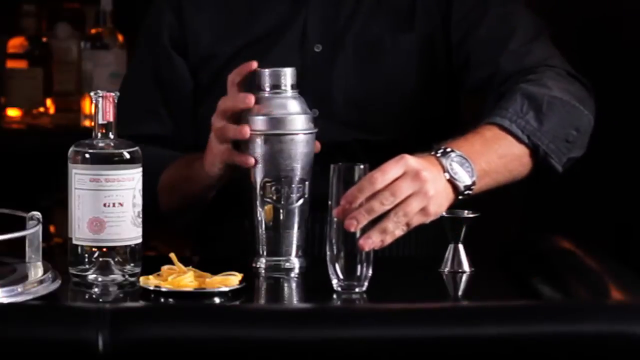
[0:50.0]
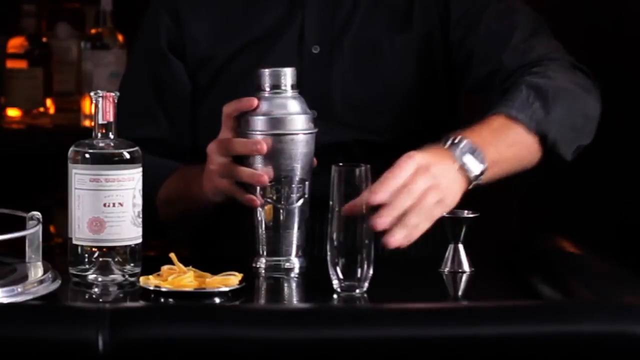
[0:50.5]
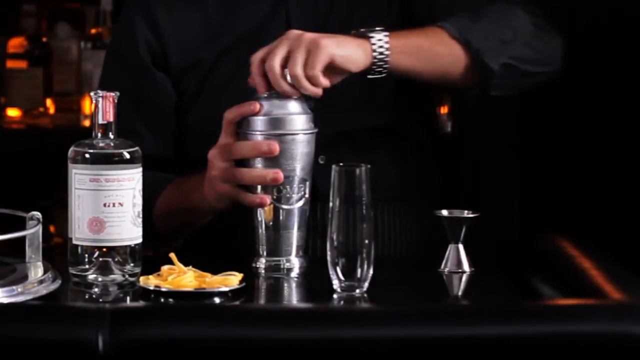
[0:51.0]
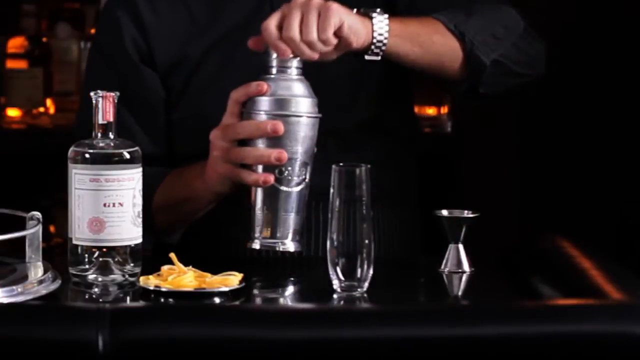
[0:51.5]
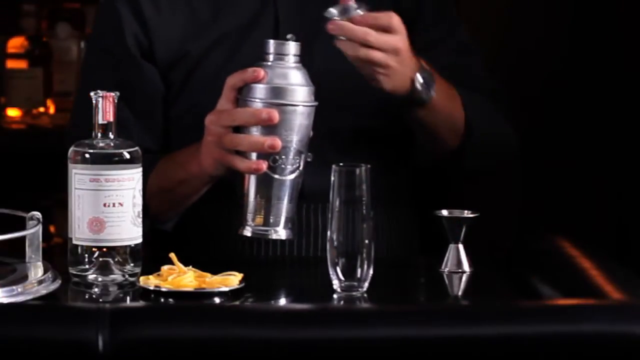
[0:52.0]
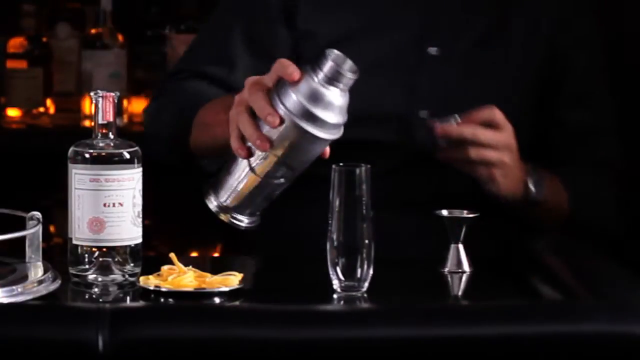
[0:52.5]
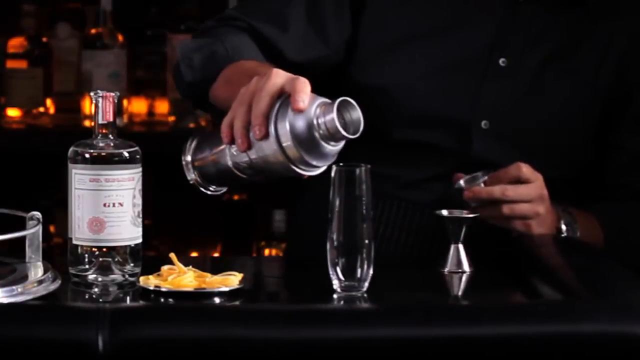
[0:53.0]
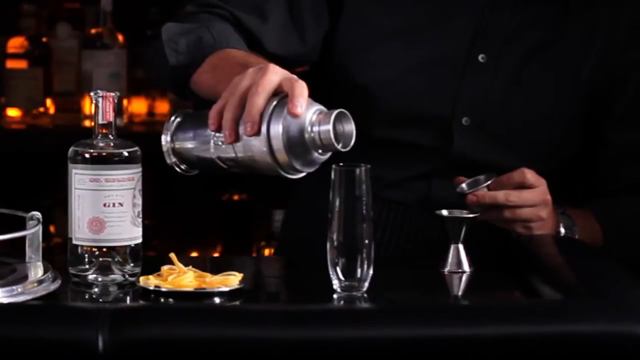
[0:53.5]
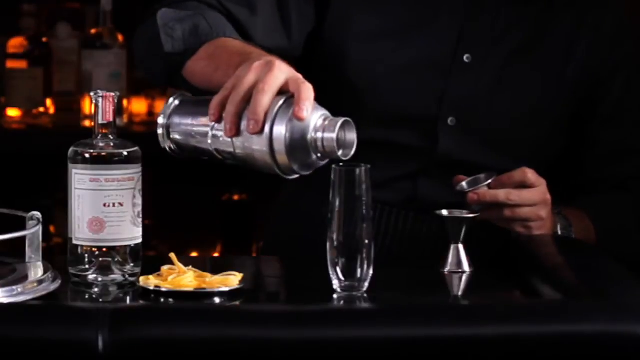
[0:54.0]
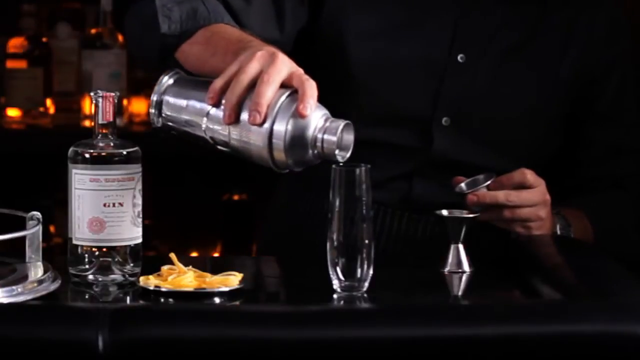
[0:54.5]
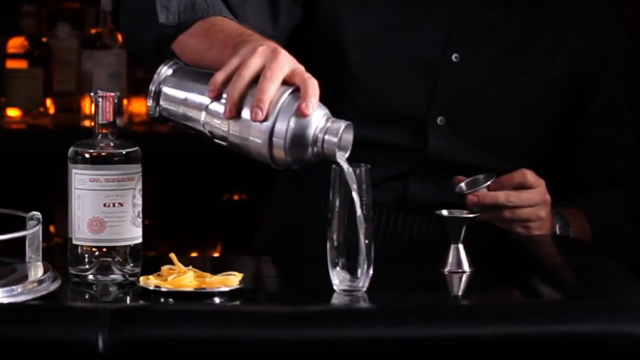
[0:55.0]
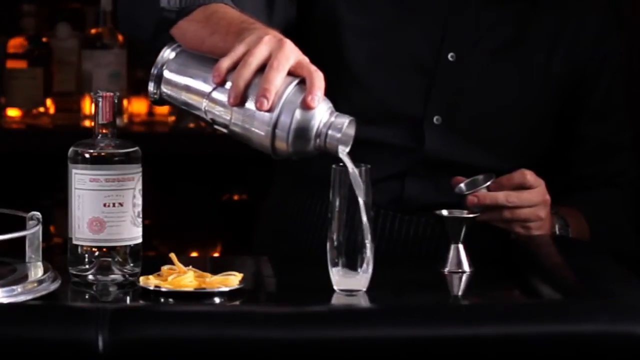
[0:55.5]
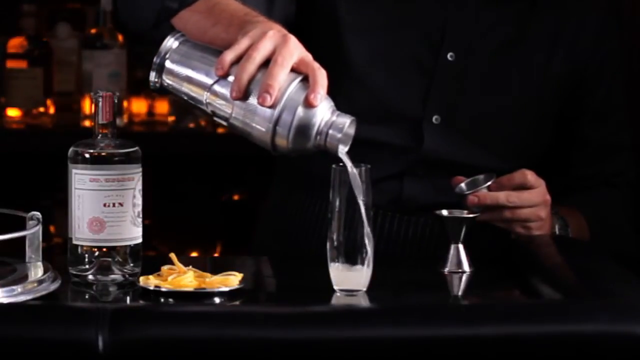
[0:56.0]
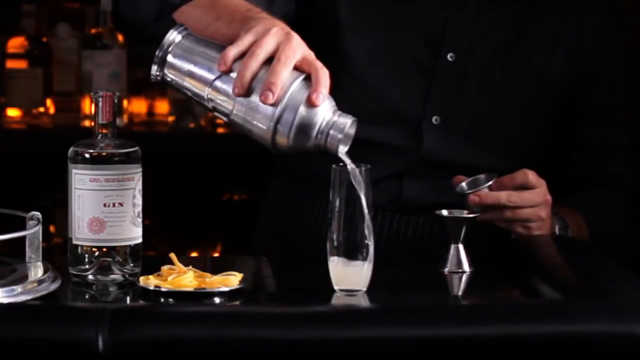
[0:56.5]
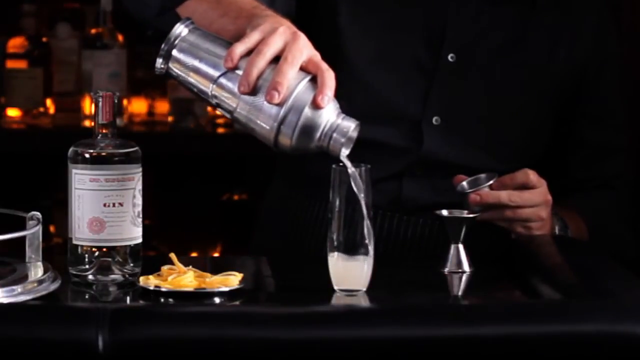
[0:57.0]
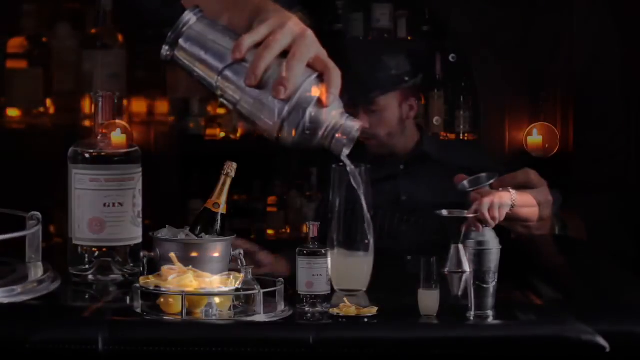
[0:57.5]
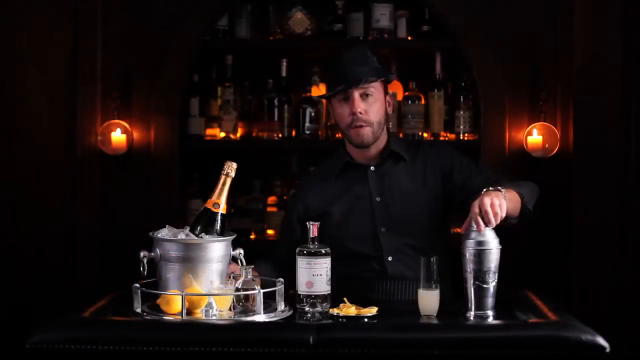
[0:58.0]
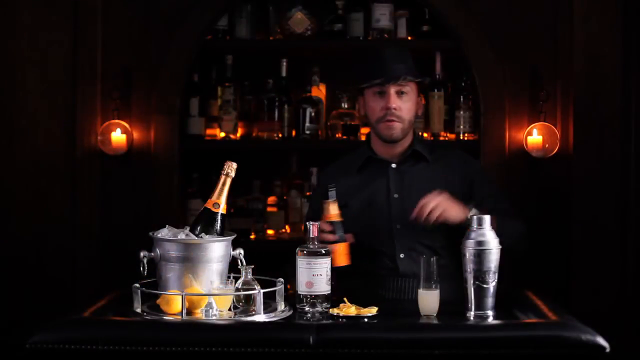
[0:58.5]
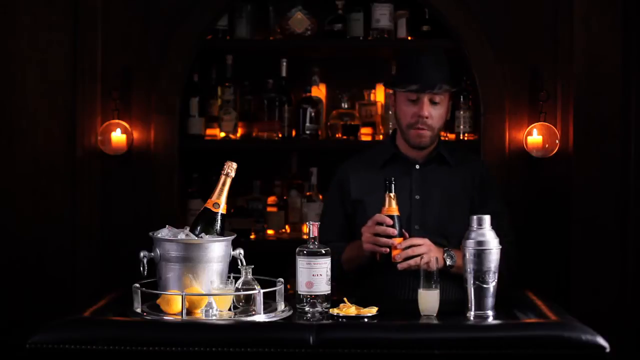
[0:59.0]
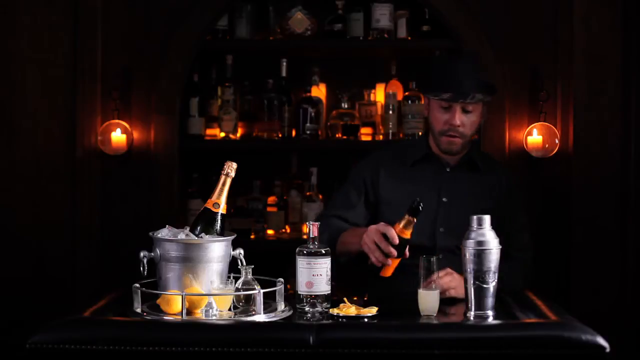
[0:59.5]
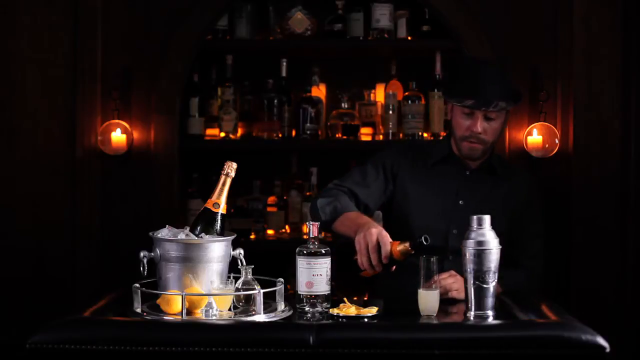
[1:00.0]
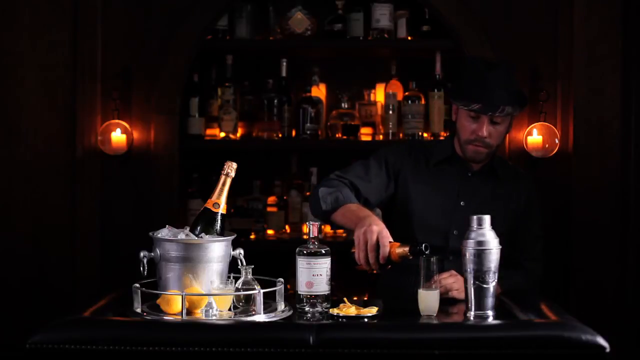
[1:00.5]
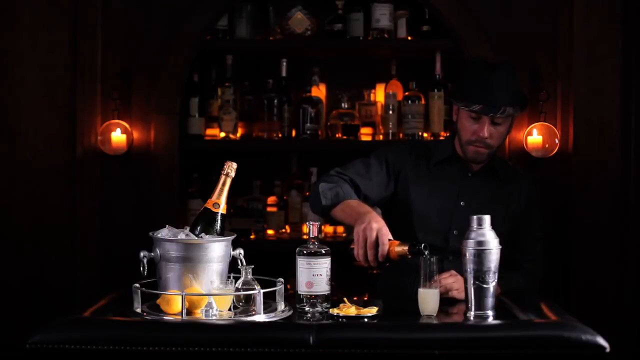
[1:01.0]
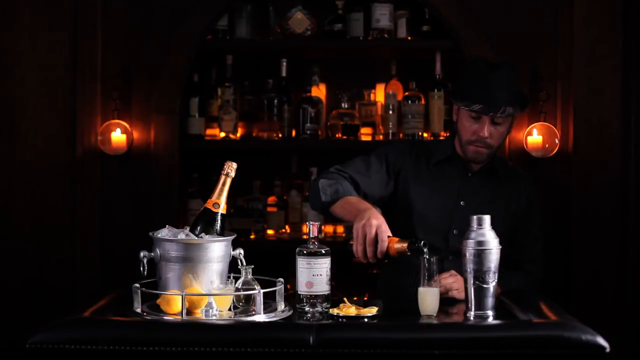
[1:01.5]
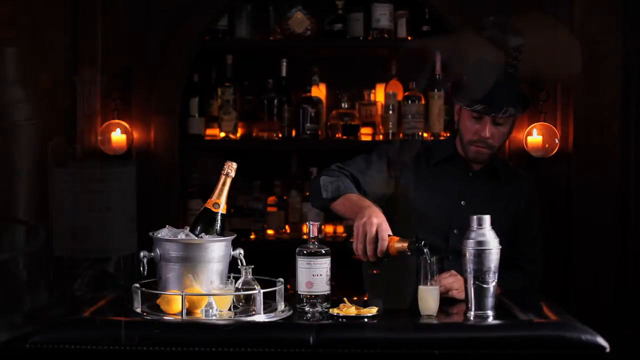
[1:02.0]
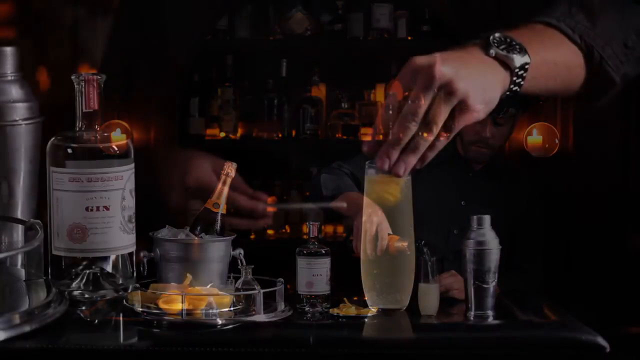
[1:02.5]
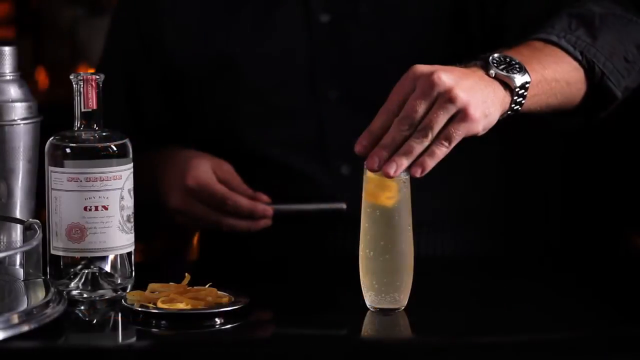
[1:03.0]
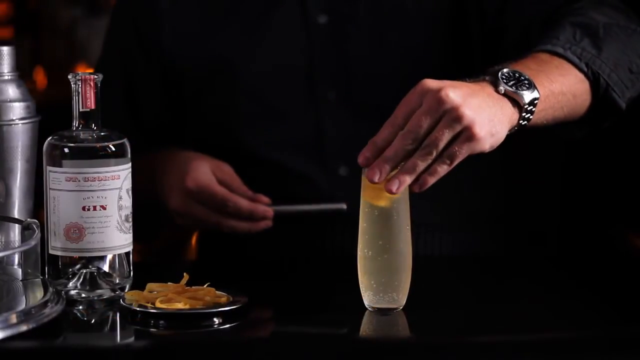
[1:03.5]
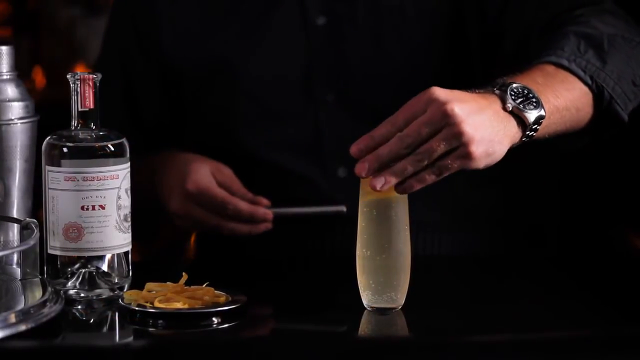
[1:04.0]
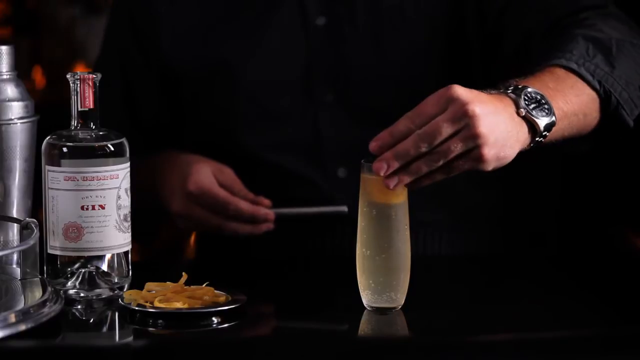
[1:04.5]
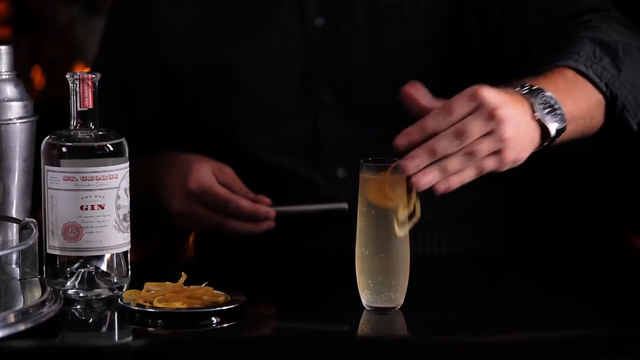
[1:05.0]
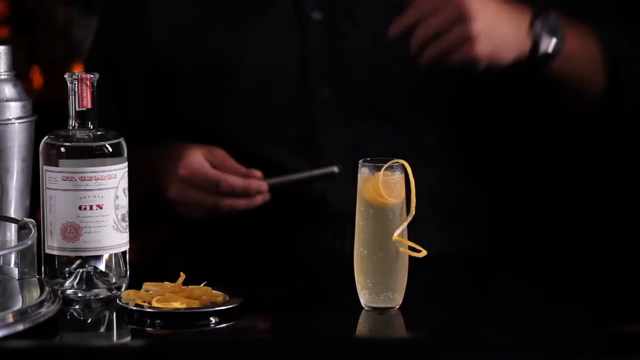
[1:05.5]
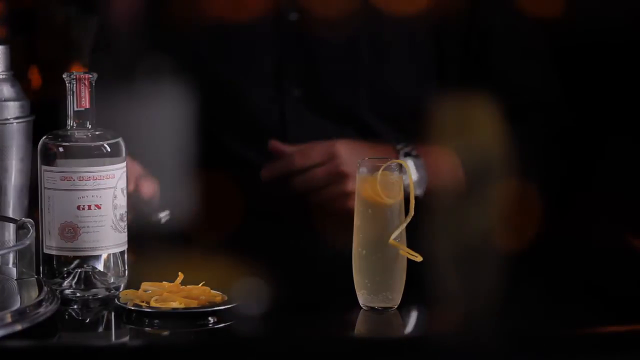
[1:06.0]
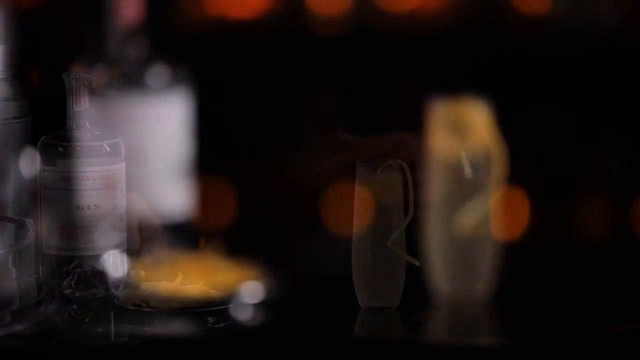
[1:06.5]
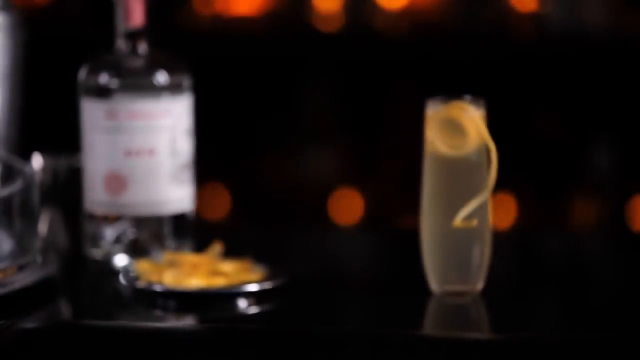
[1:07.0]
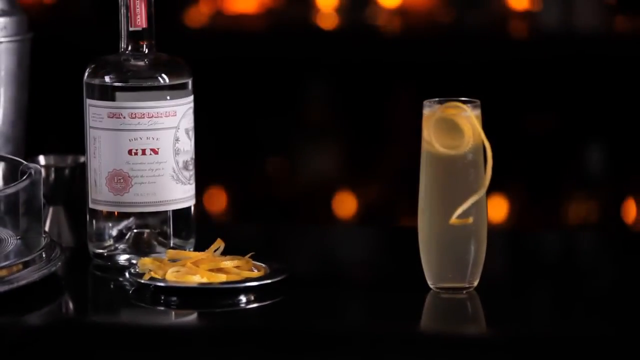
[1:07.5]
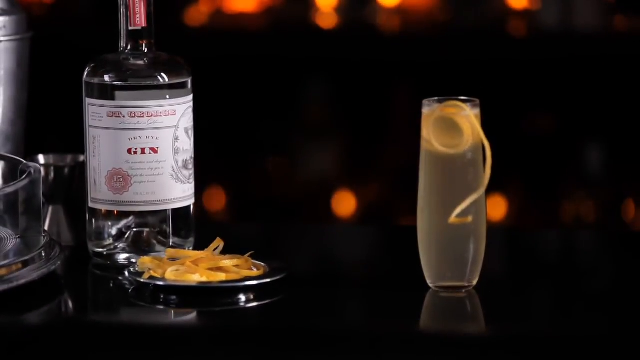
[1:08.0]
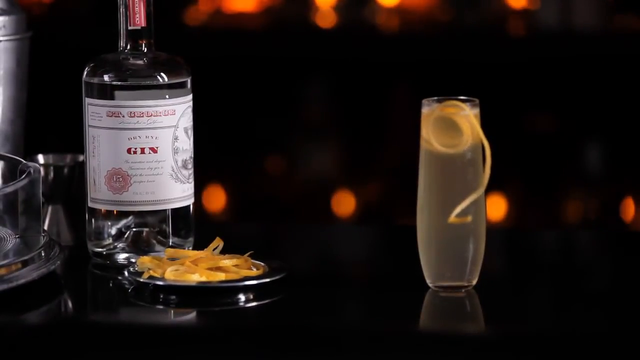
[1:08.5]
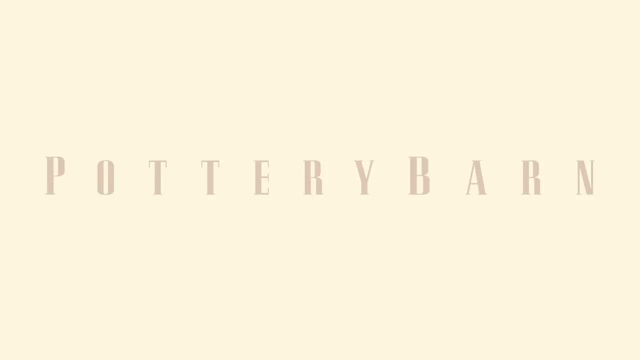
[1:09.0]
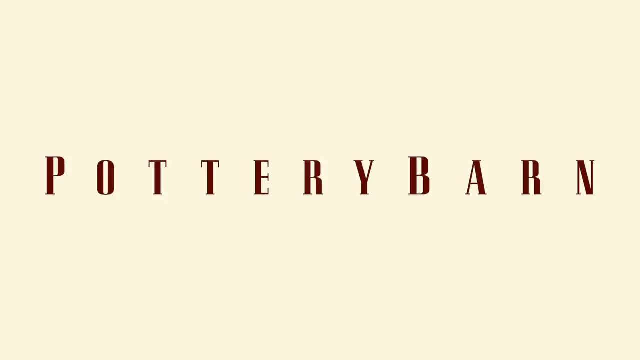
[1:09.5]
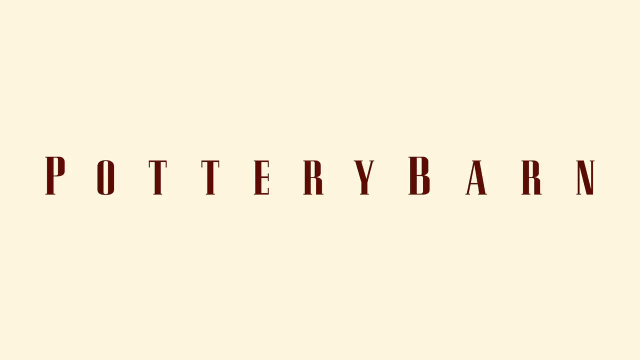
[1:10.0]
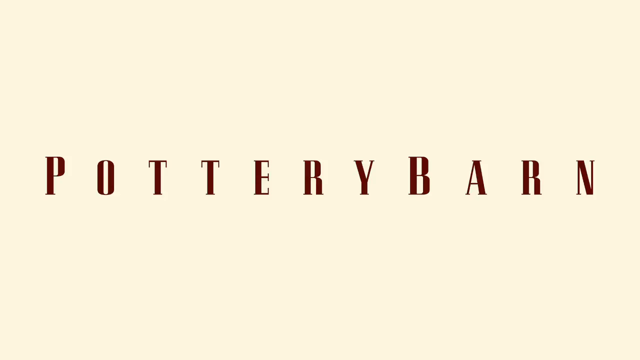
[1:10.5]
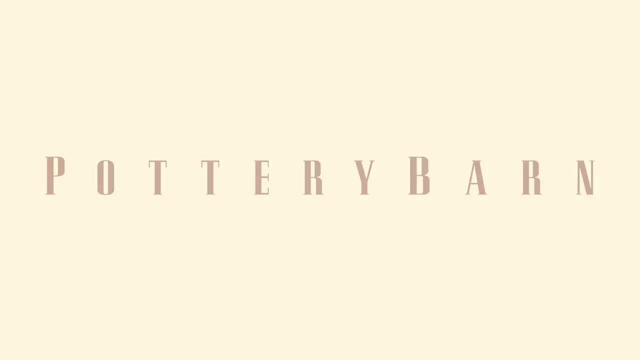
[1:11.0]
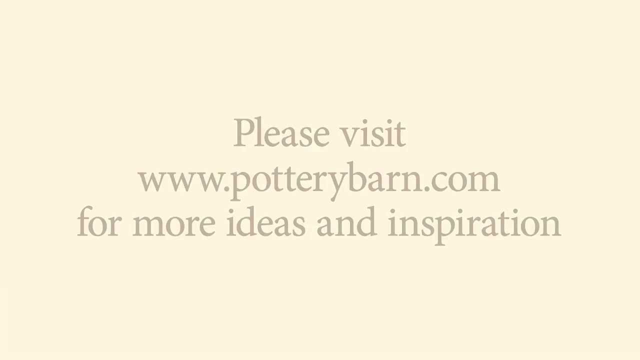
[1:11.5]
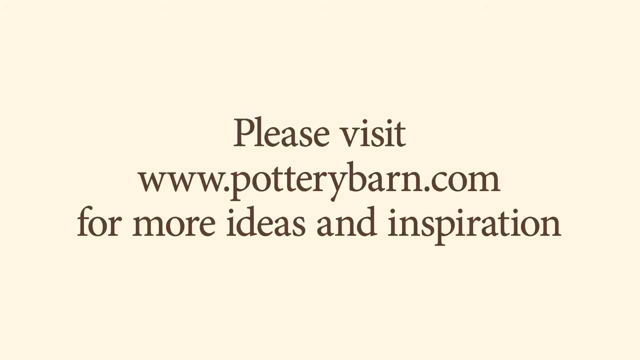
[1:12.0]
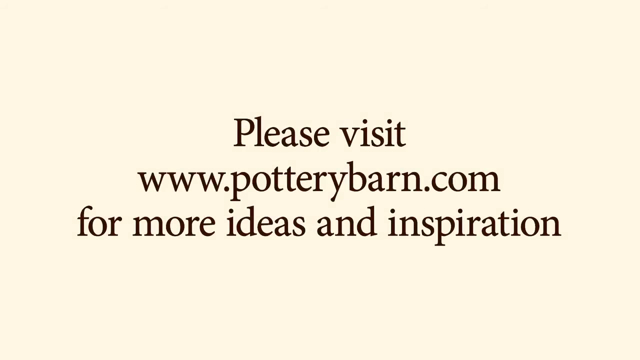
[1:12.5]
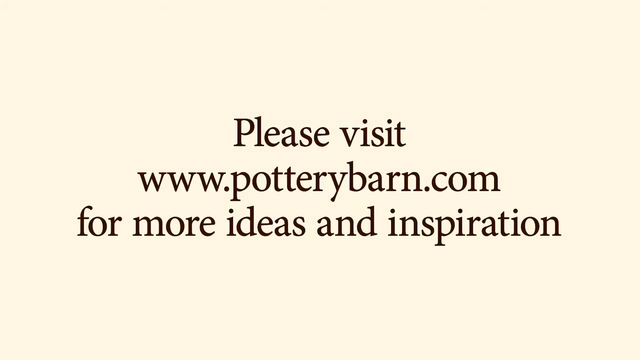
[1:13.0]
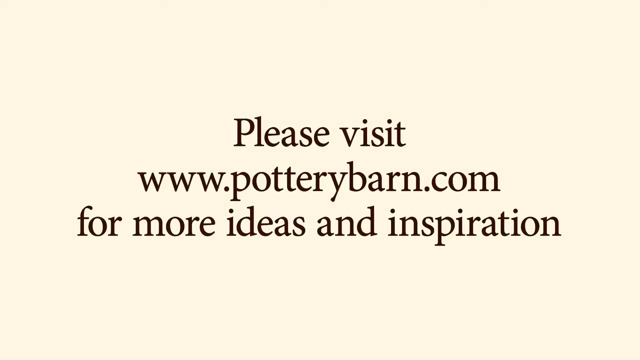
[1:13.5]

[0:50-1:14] The bartender picks up the empty glass with his left hand, which wears a wristwatch, while his right hand holds the cocktail mixer. He opens the mixer and pours its contents into the glass, then takes out a small bottle of what looks like champagne from the bottom of the bar table and adds the sparkling champagne to the mixture. Finally he adds the lemon rinds and stirs.